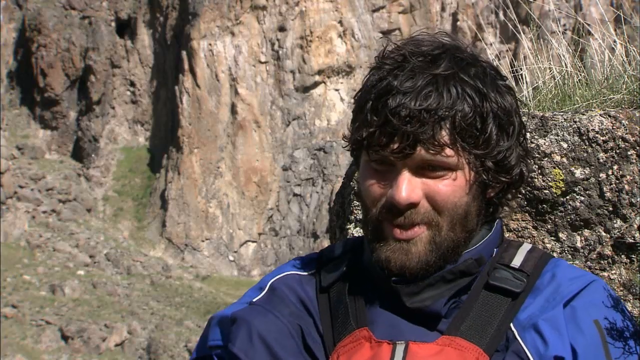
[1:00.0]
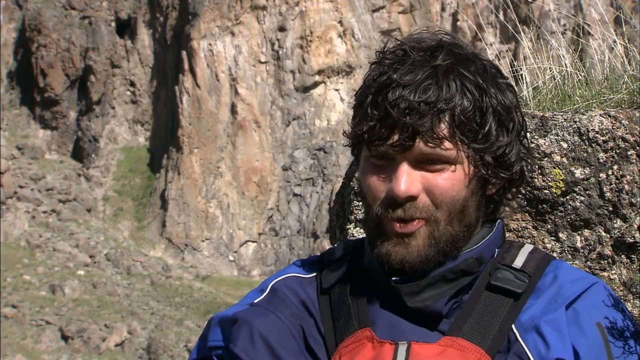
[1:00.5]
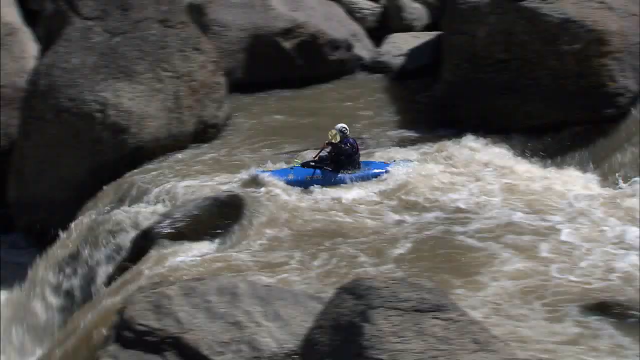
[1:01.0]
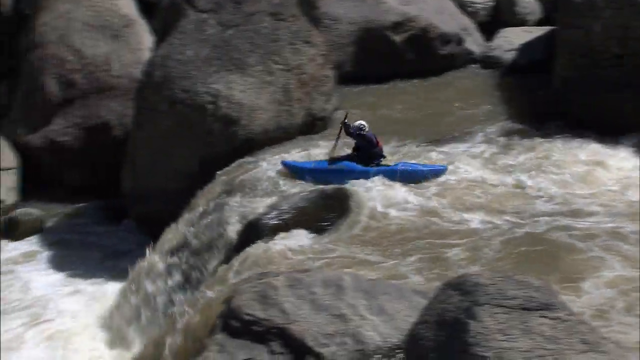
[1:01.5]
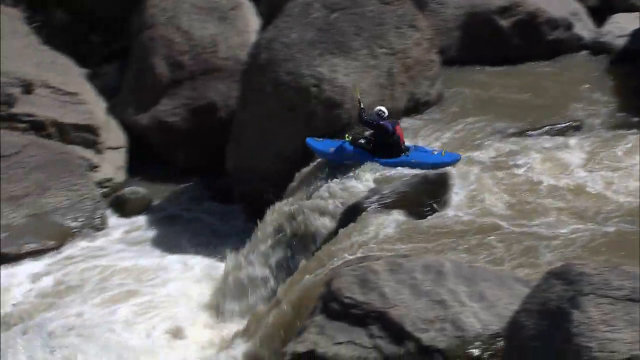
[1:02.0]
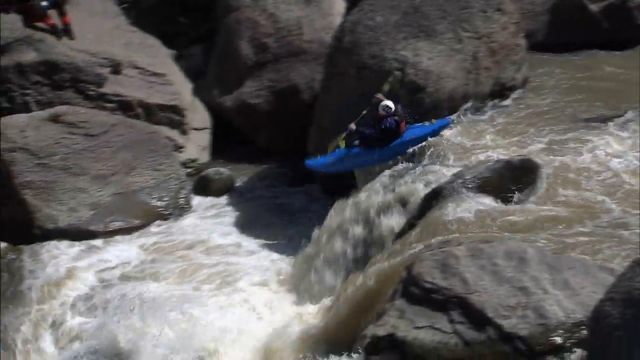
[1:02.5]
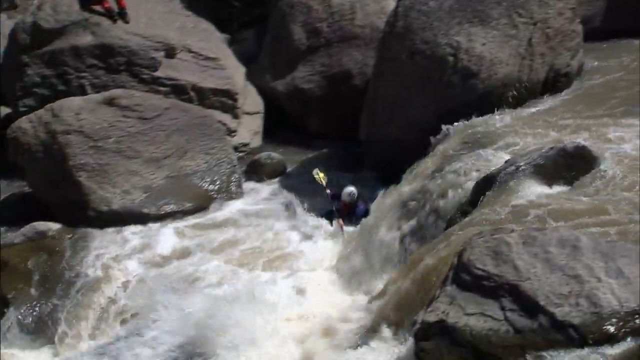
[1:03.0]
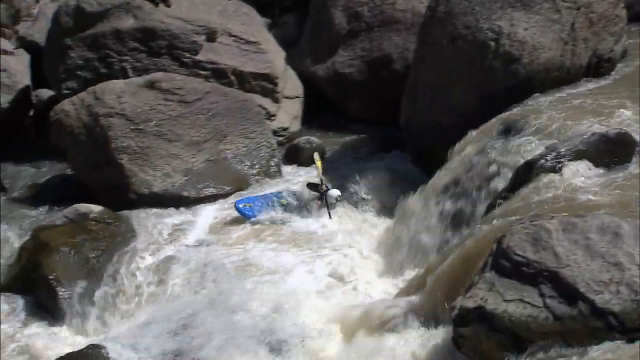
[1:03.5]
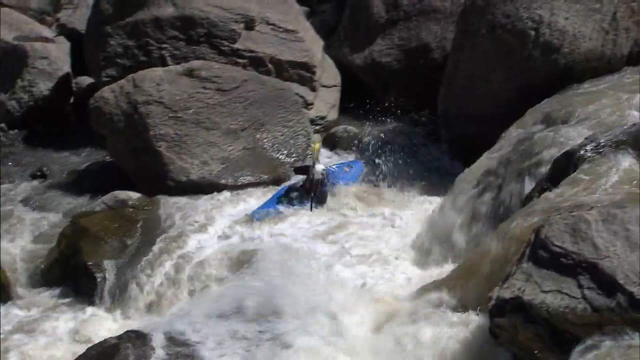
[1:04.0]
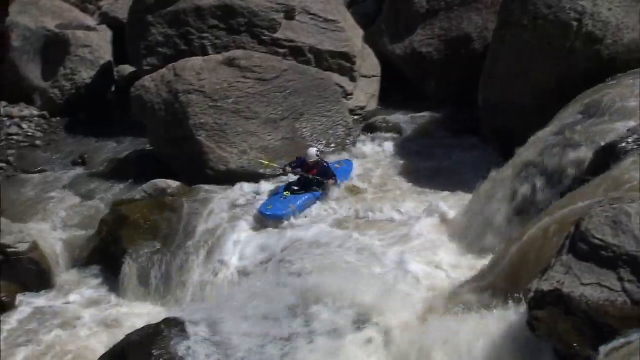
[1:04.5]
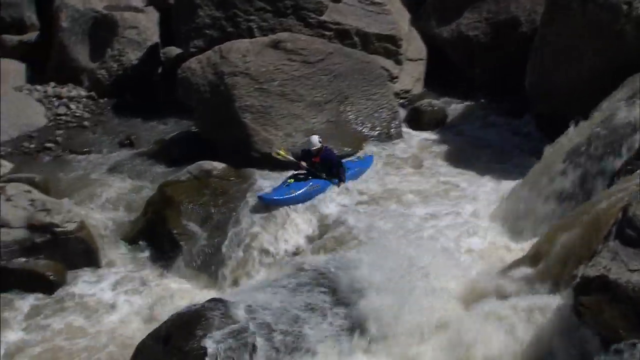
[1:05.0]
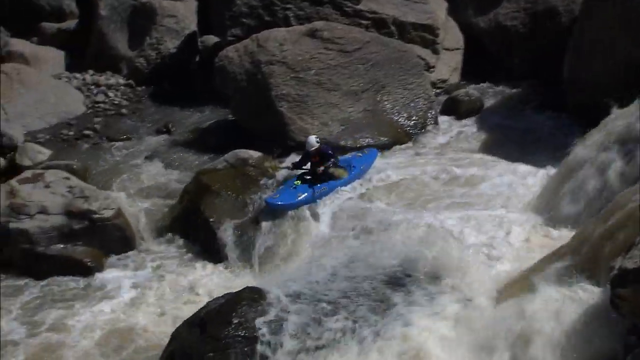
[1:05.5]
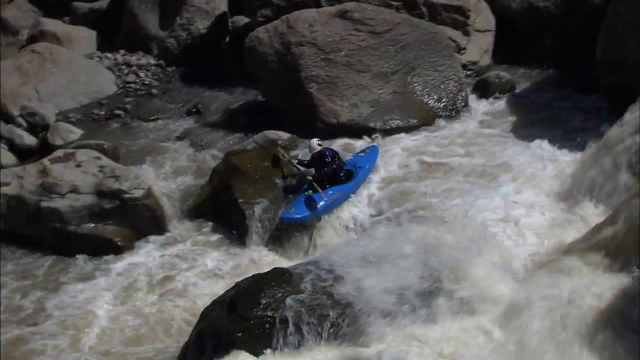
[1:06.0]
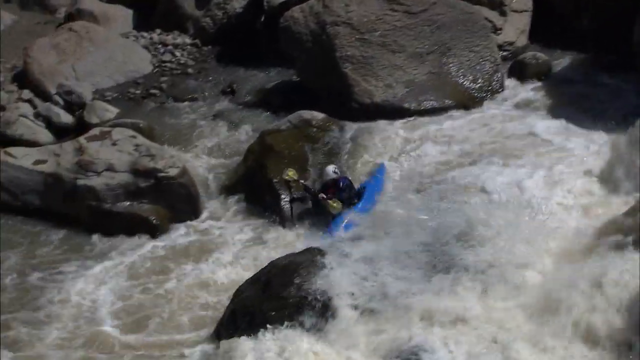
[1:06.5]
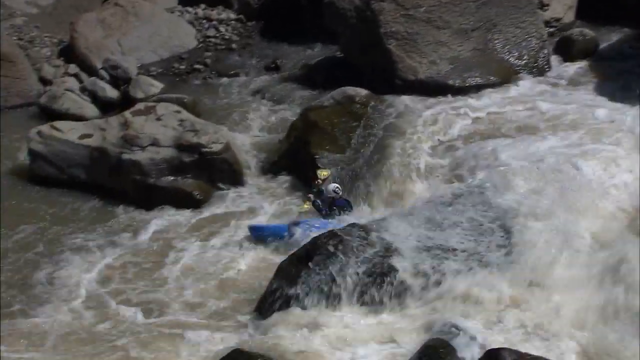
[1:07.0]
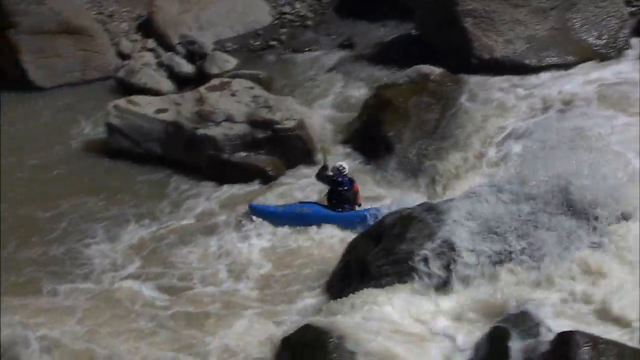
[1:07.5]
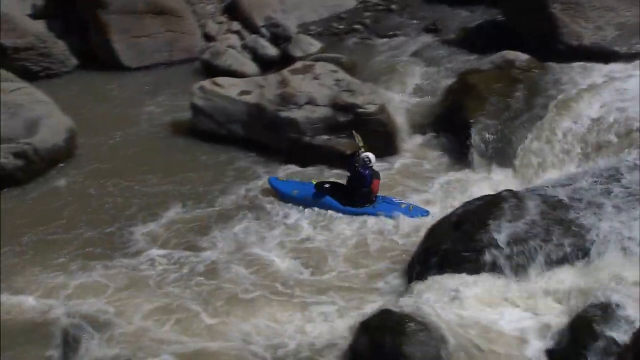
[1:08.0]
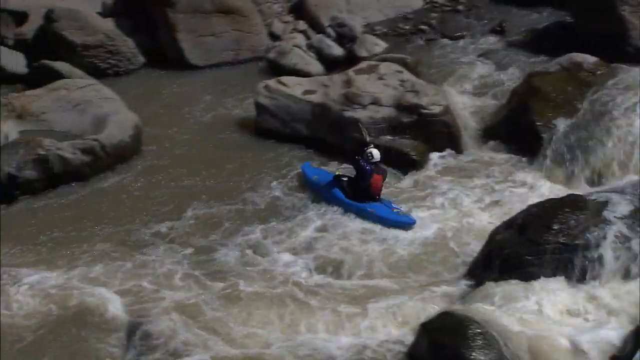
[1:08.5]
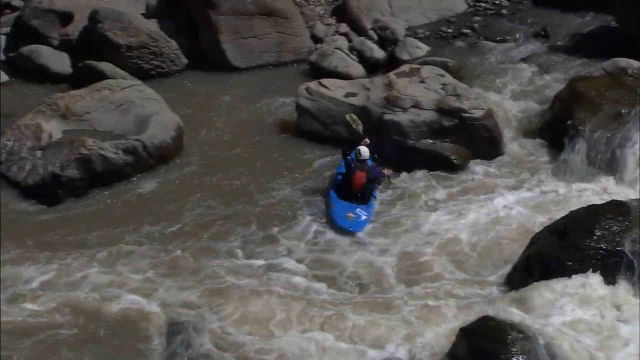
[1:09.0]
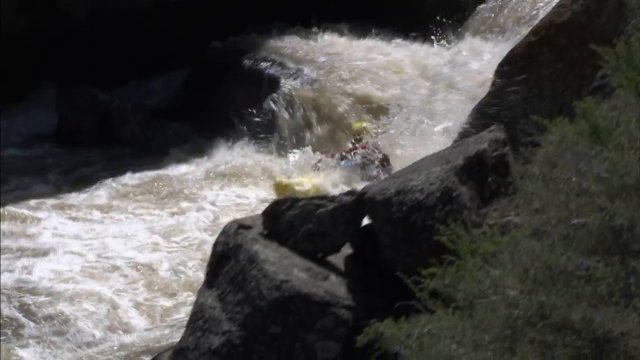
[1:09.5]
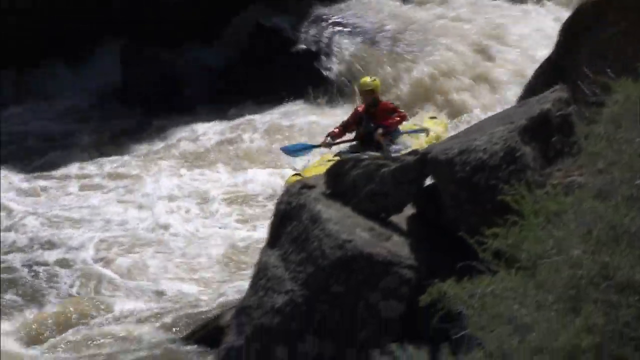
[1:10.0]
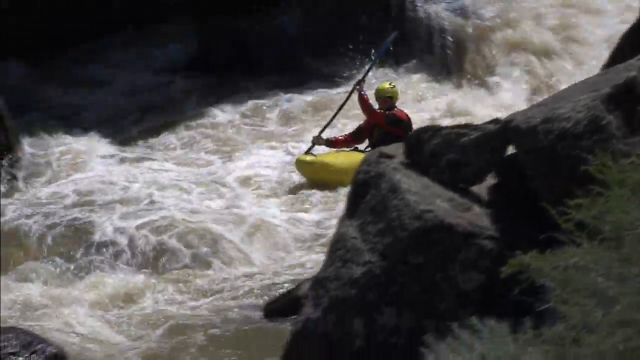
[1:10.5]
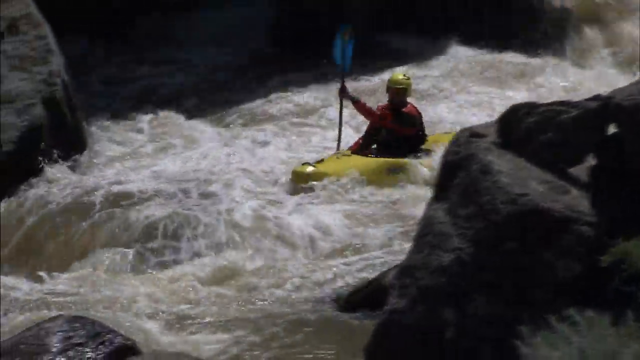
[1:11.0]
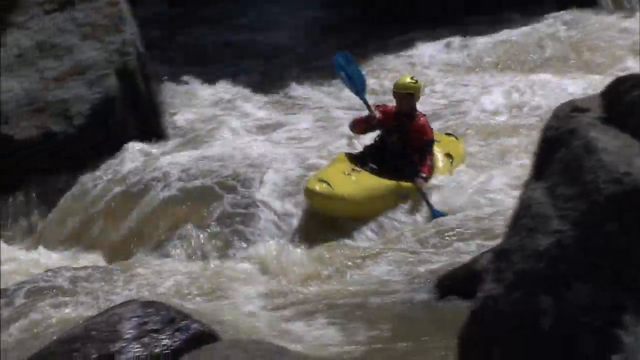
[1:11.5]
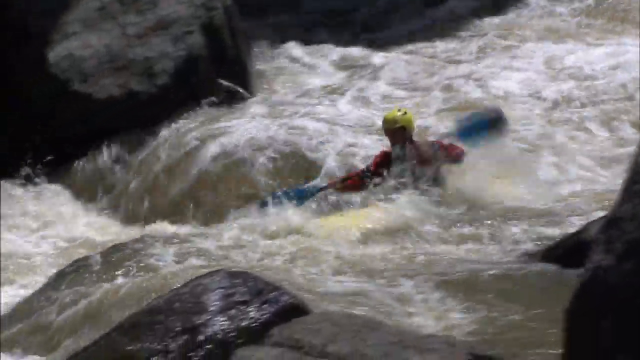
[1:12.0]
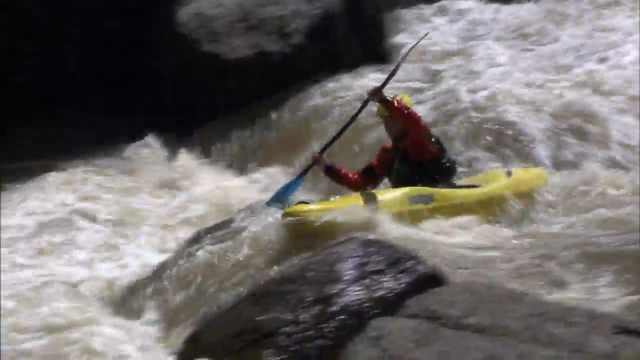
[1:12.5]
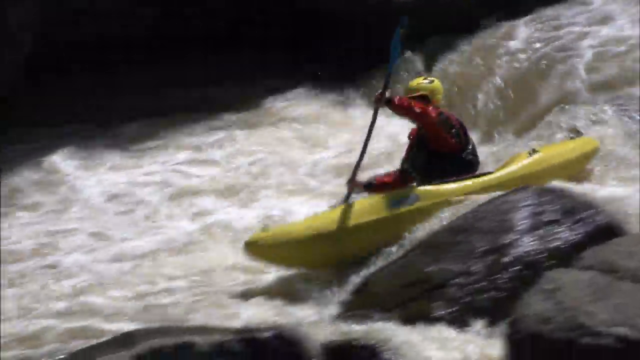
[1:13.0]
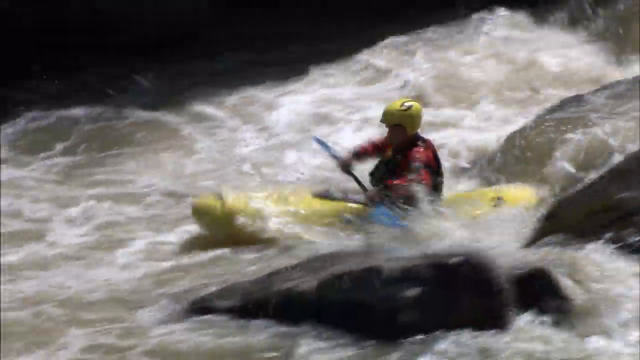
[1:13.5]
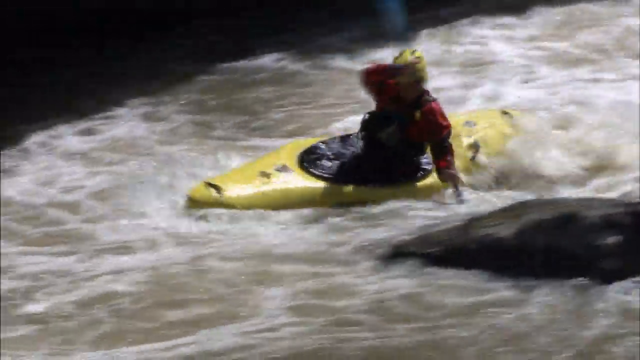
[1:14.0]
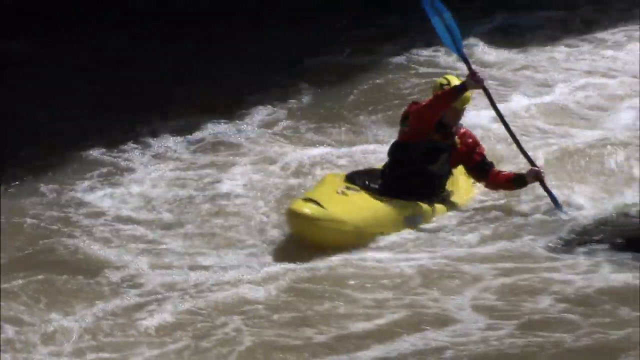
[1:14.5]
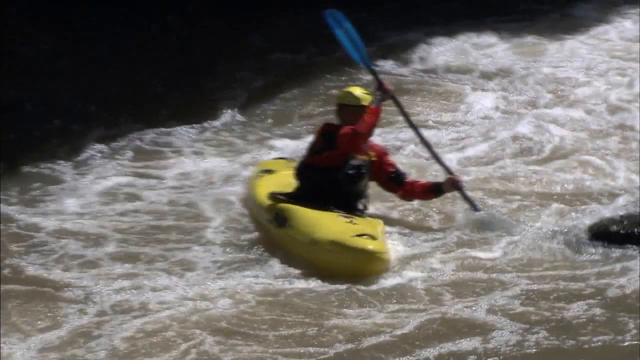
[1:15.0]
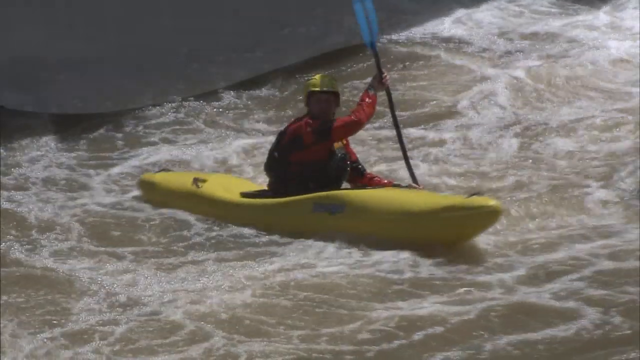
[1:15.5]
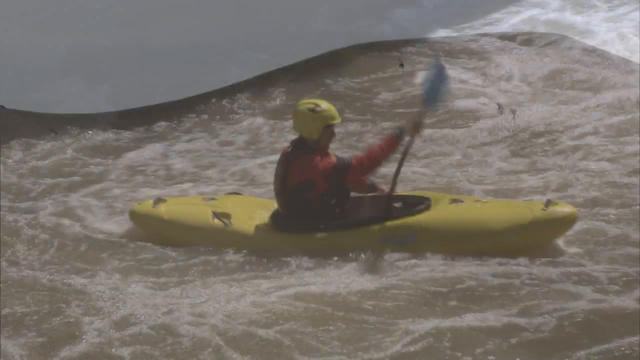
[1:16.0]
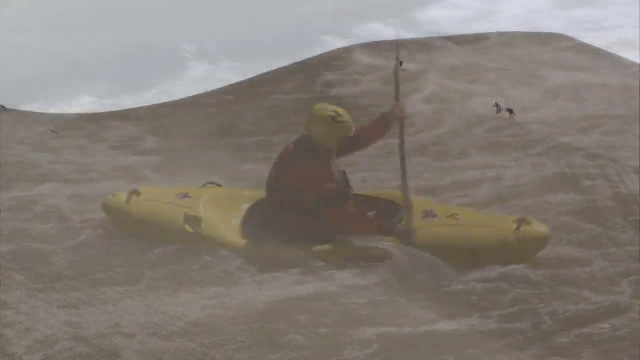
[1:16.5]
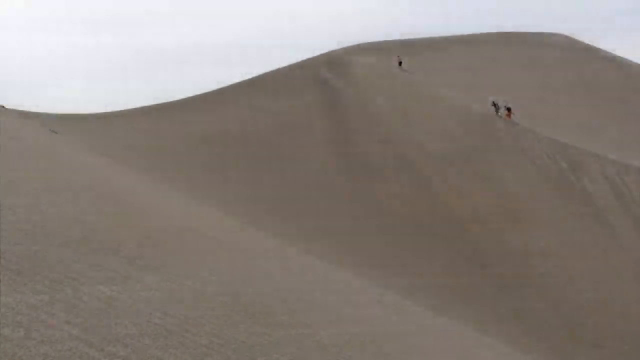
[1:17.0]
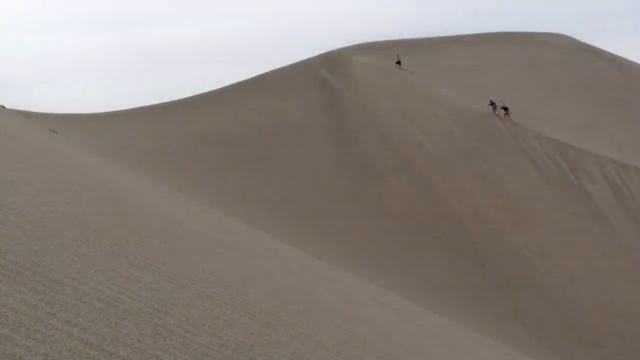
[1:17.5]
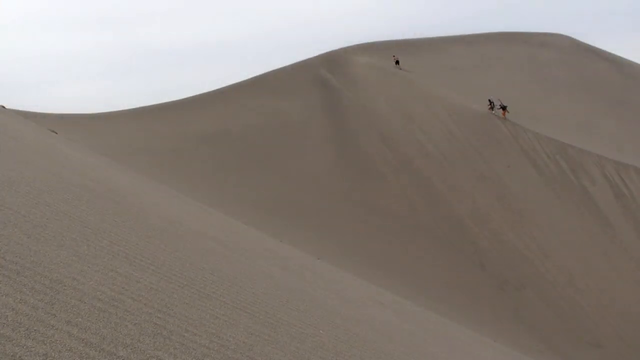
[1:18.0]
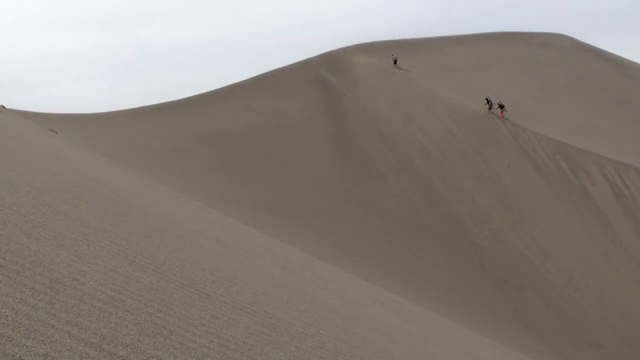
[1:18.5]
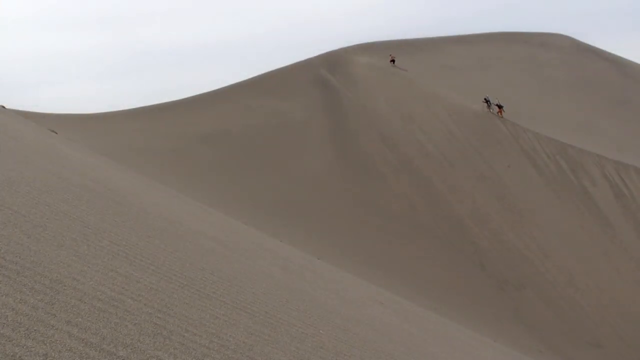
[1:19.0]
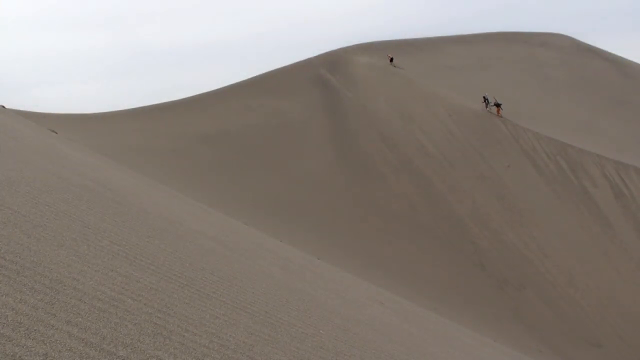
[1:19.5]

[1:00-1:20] The man talks briefly in his interview. Then someone in a blue kayak approaches a little drop from a waterfall and rows the boat right off the waterfall into the lower area of water. White waves and water crash around, but the person keeps rowing, goes down another little slide, and ends up in a flat area of water with large rock forms around, turning the boat to the left. Next, someone in a yellow kayak does essentially the same thing, alternating the direction they row with their arms, going down a little slide and rowing to their right; they appear to position the paddle upright, and the boat comes to a stop. The scene then shows a desert mountain with three people very far away hiking up its side.